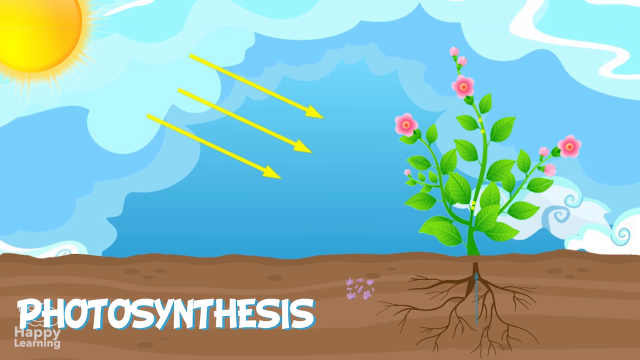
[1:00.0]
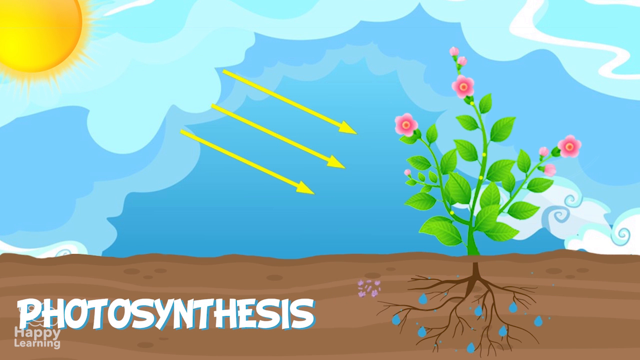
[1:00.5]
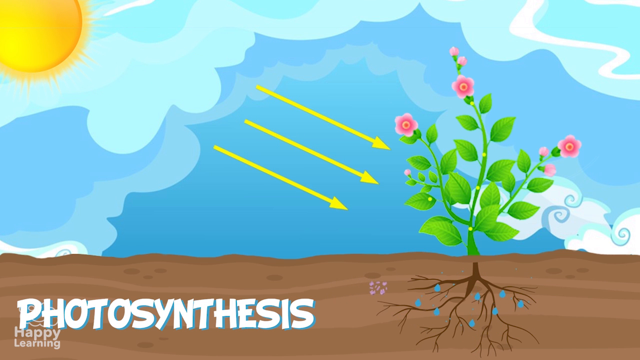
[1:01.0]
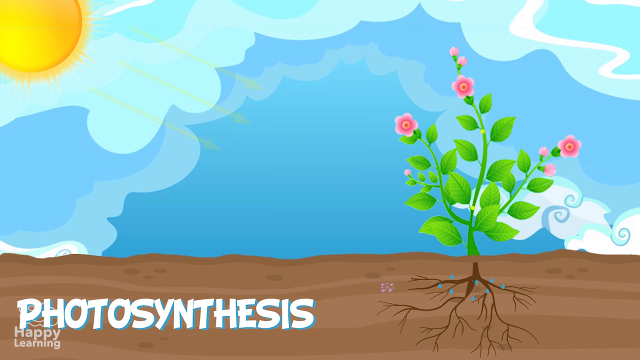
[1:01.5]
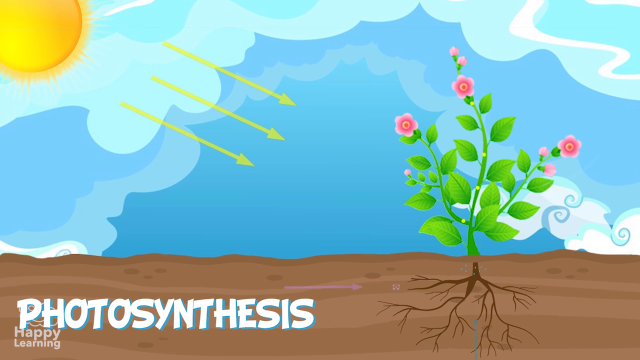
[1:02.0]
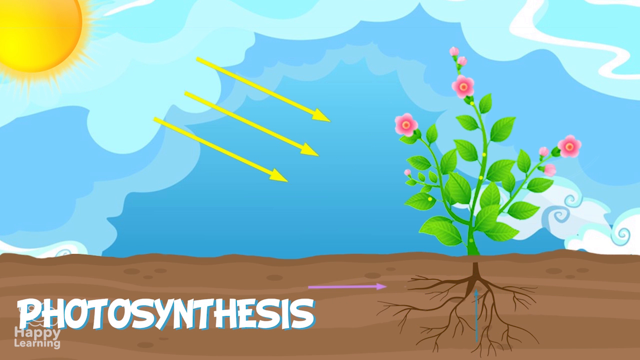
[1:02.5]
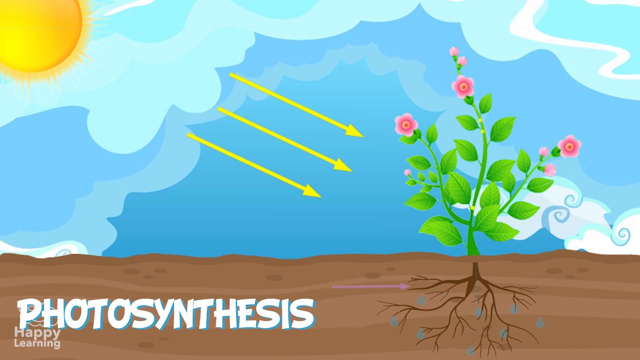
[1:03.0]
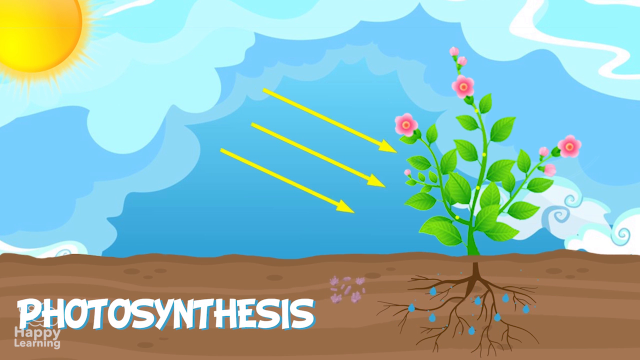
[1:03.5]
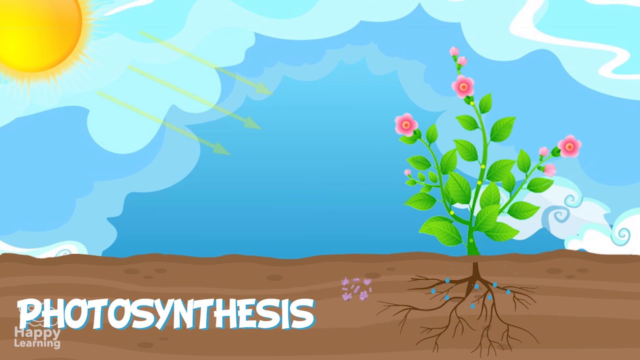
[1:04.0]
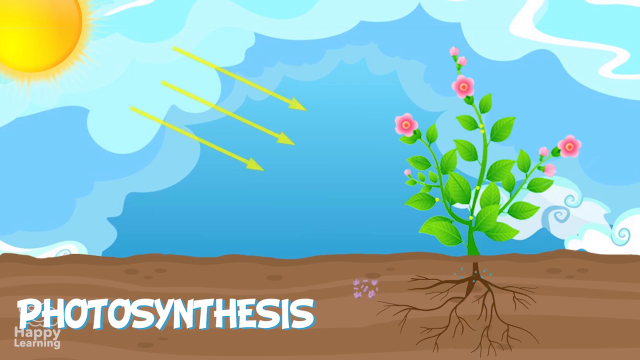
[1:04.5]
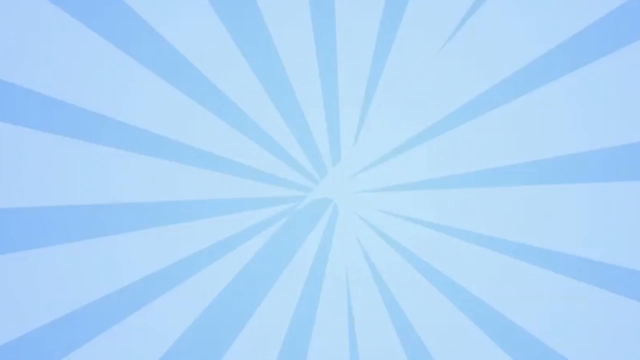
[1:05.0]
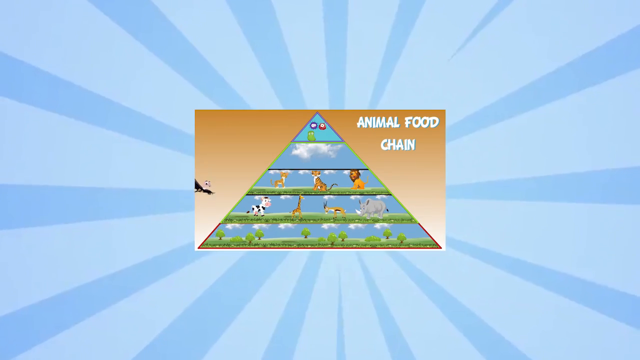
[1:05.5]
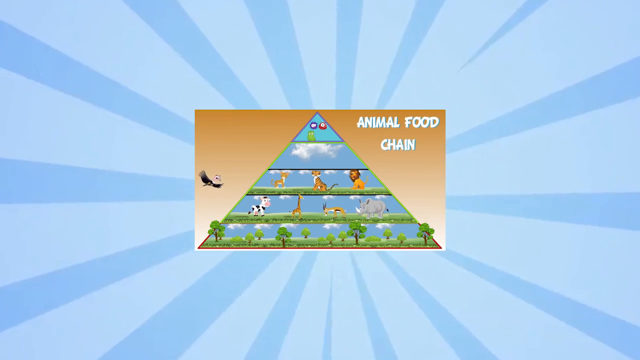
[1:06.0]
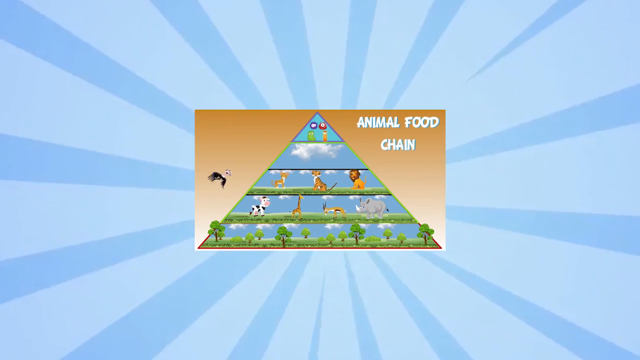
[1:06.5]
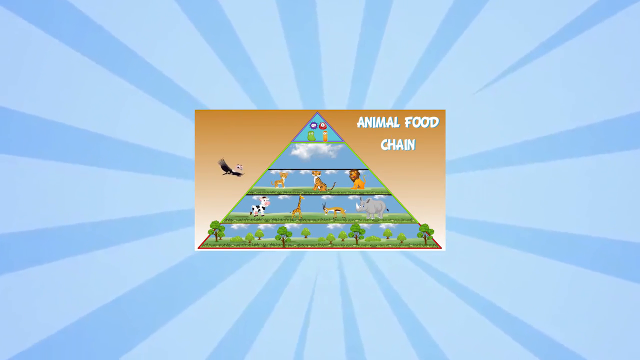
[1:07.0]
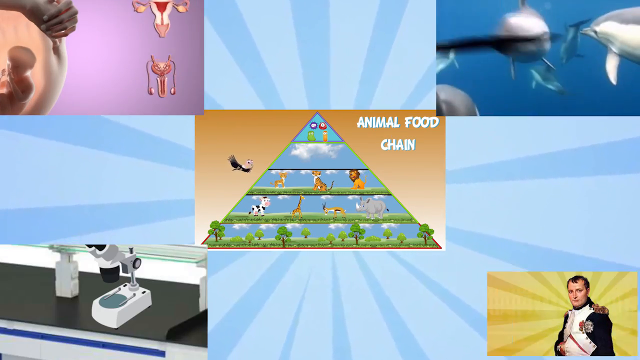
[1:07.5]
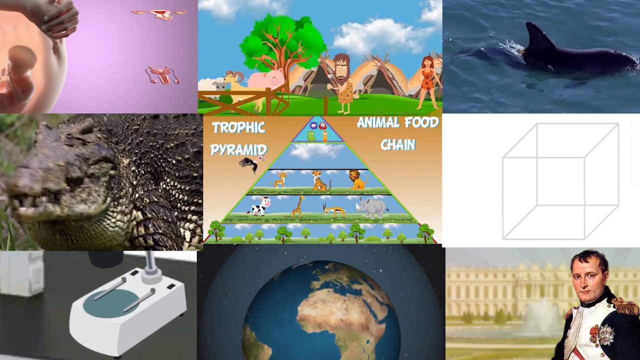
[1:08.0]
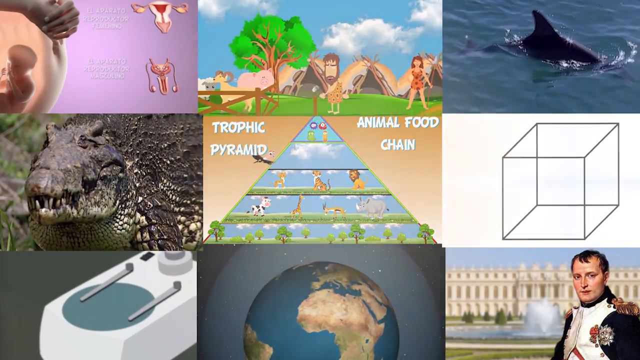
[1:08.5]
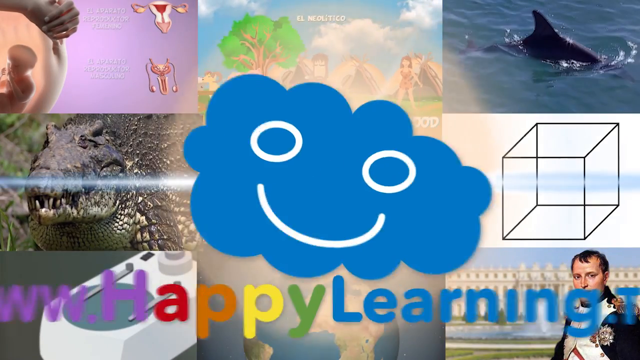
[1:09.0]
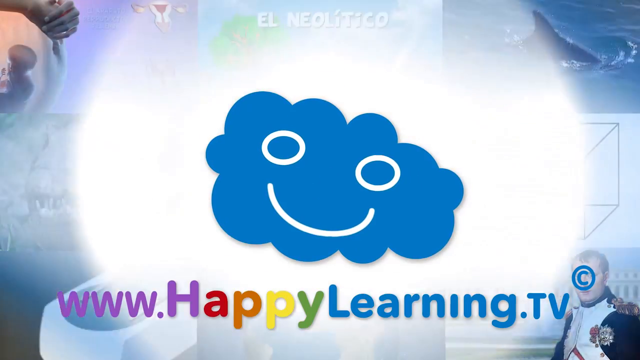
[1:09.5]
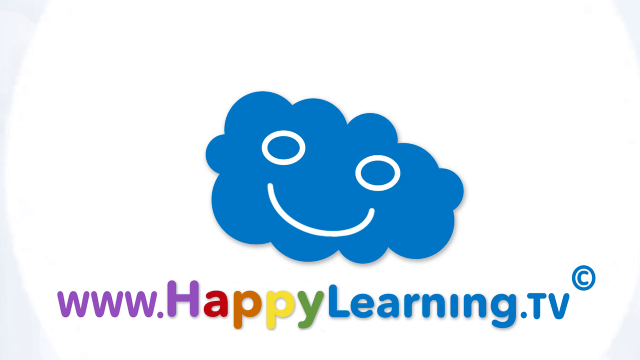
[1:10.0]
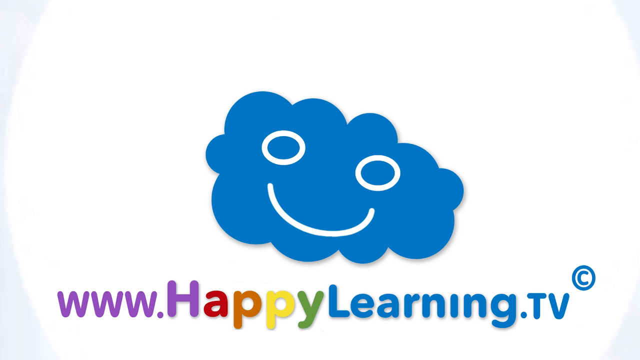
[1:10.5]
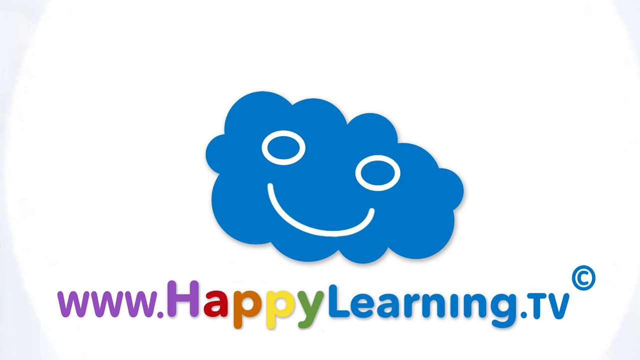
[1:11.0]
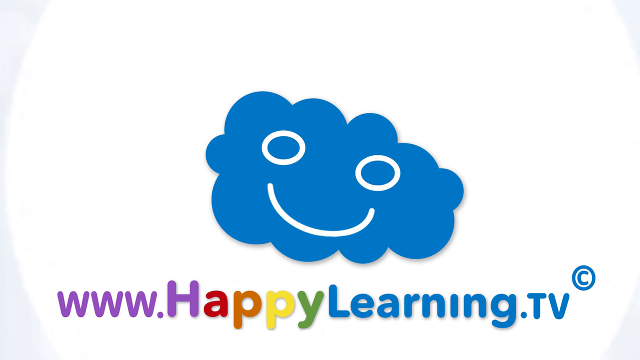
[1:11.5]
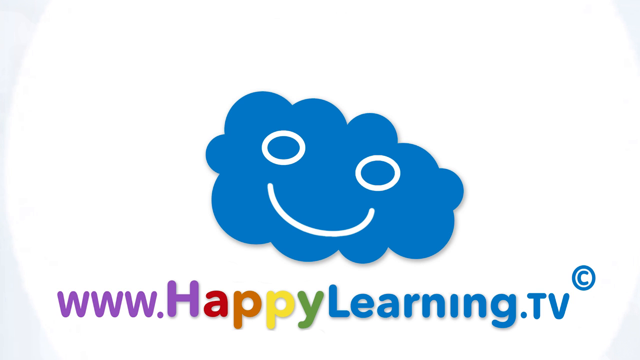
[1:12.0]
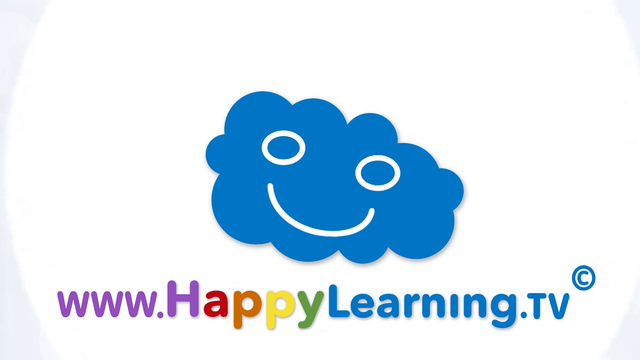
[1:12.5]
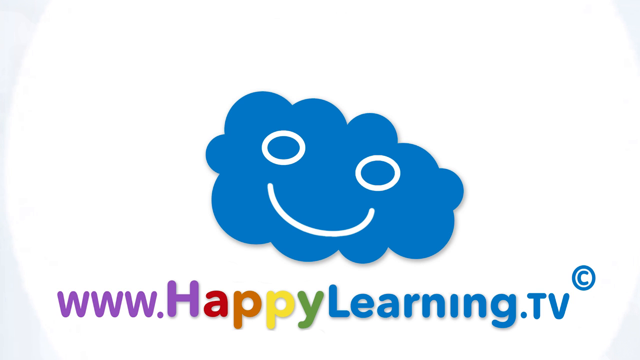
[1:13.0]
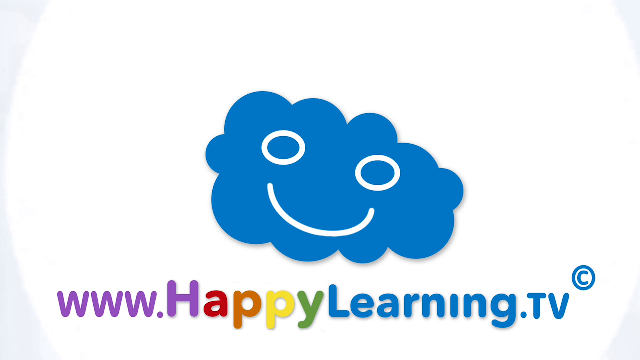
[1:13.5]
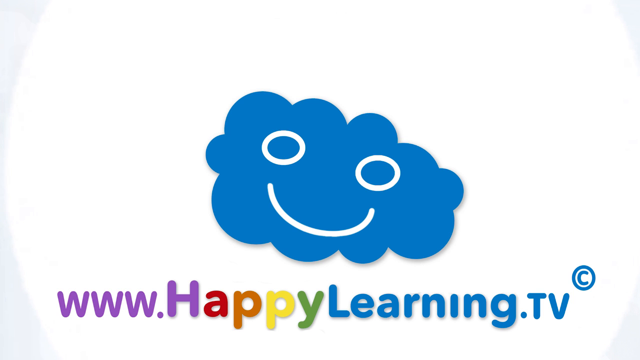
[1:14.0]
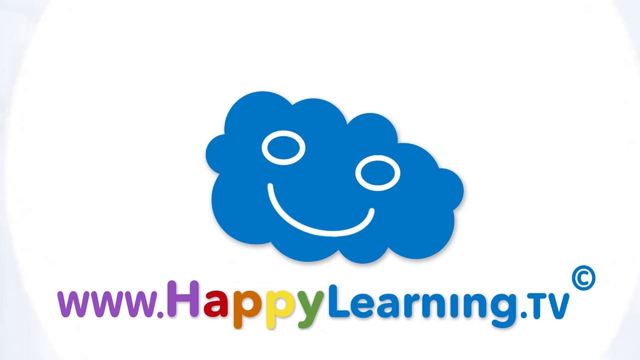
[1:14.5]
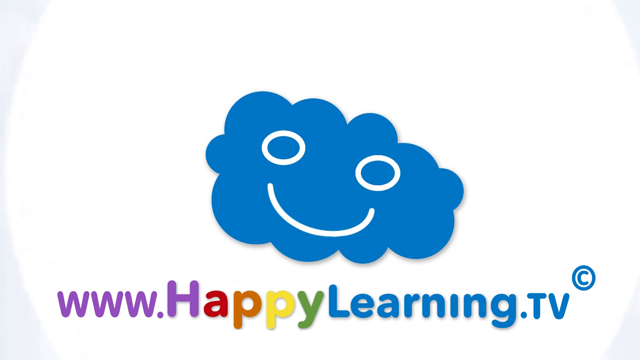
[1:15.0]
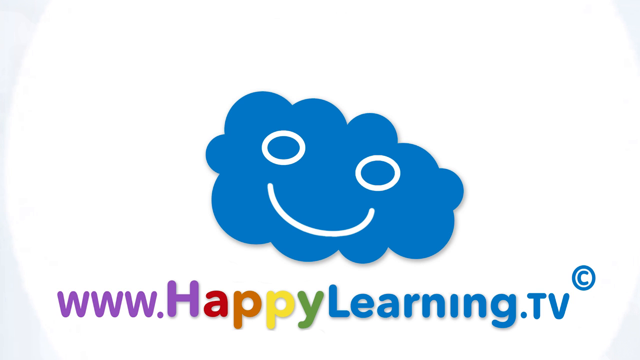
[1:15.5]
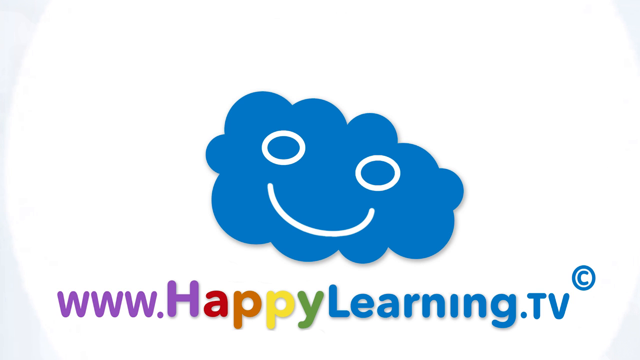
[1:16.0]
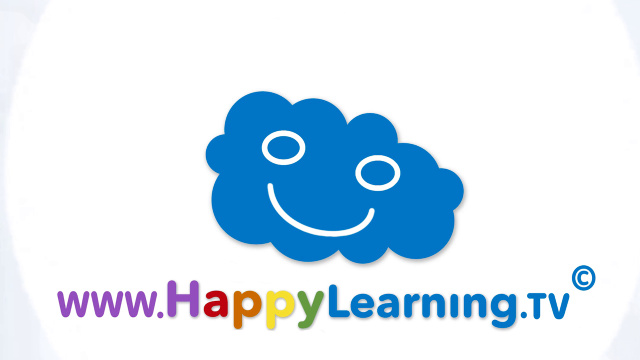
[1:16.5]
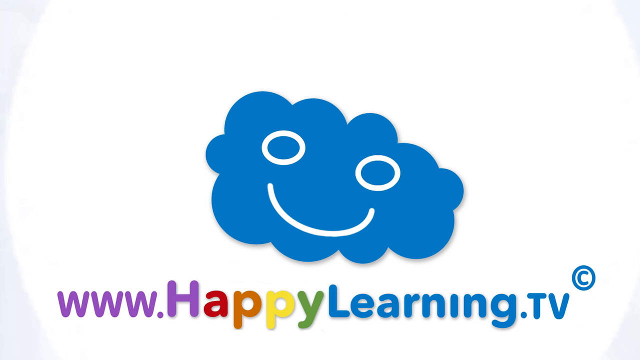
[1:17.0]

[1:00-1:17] The photosynthesis diagram continues for several seconds, with the three yellow parallel lines coming from the direction of the sun toward the plant. At the same time, what looks like water goes up the roots of the plant, apparently visually demonstrating the process of photosynthesis. The video then quickly transitions back to the animal food chain pyramid, now much smaller and centered on a kind of light blue background with a kind of burst effect of darker blue rays. After a few seconds, the centered pyramid is surrounded by other images in a three-by-three arrangement, such as a crocodile, a cube and the earth. This transitions to an end screen with the same blue cloud with the happy face from earlier and the website "www.happylearning.tv" below it.